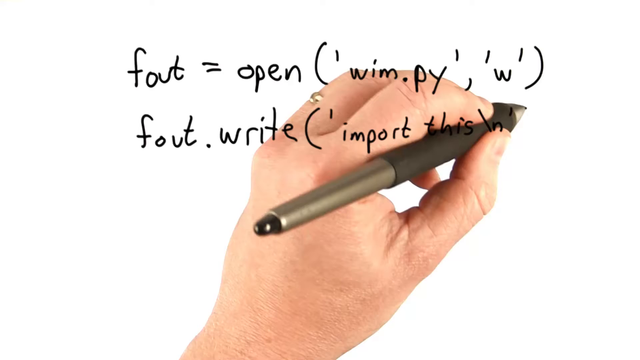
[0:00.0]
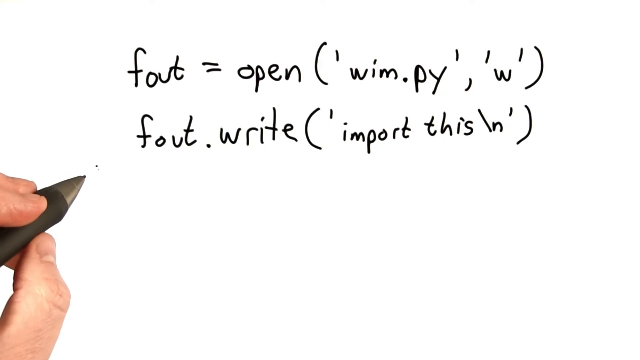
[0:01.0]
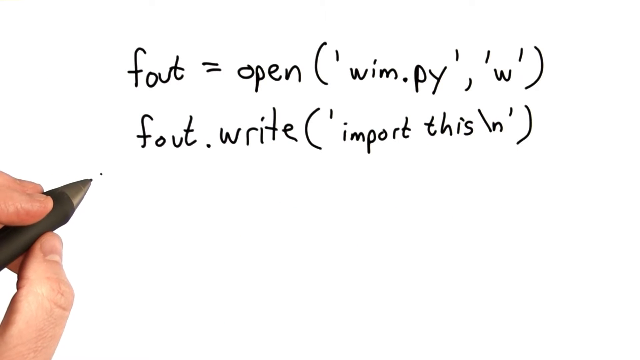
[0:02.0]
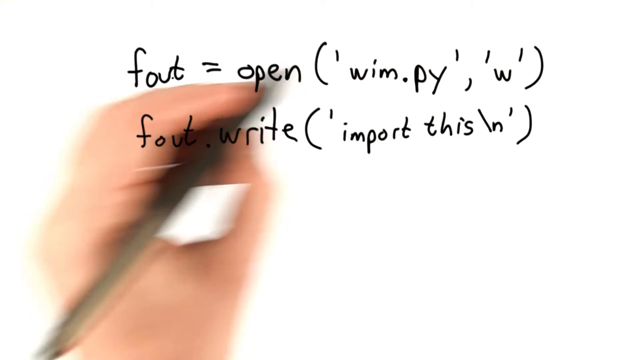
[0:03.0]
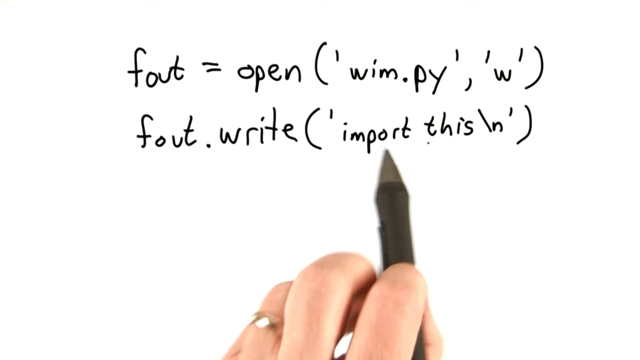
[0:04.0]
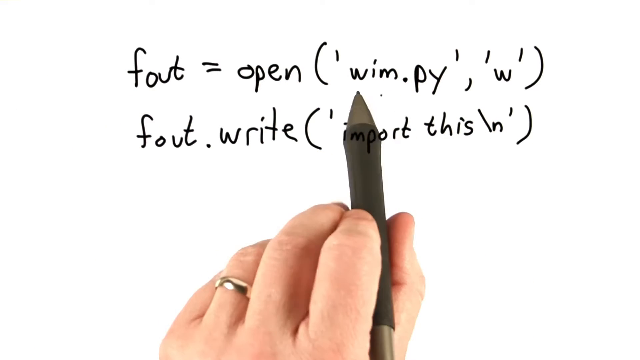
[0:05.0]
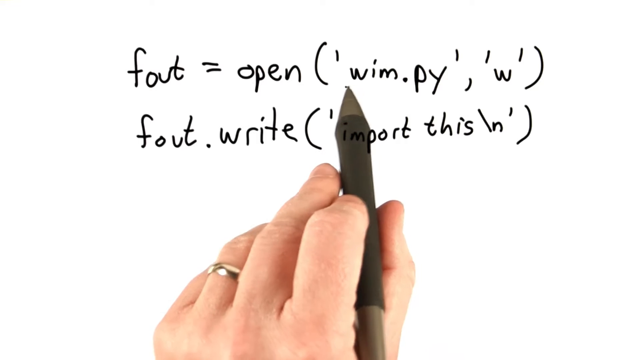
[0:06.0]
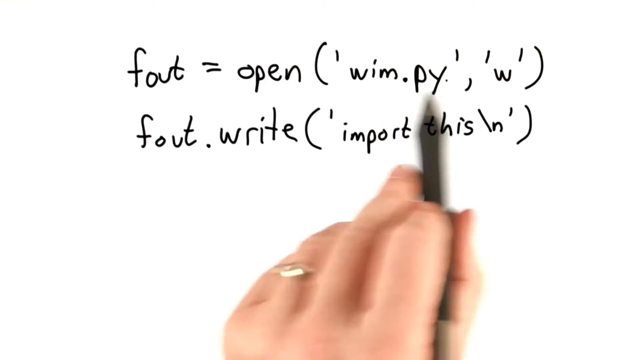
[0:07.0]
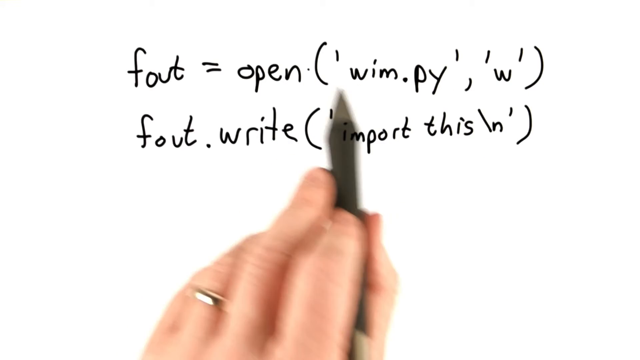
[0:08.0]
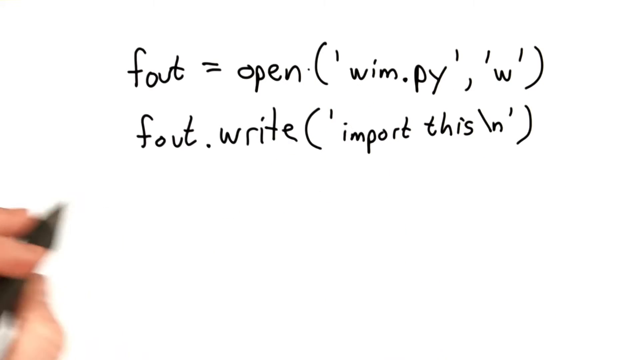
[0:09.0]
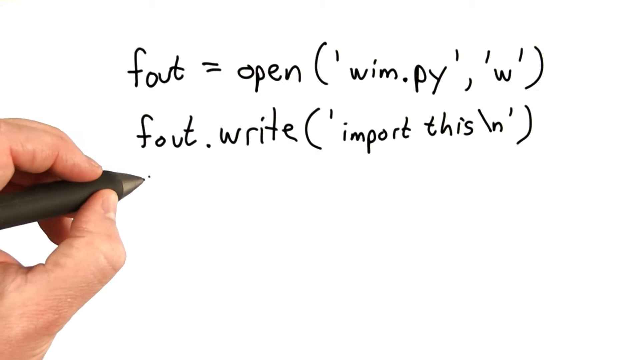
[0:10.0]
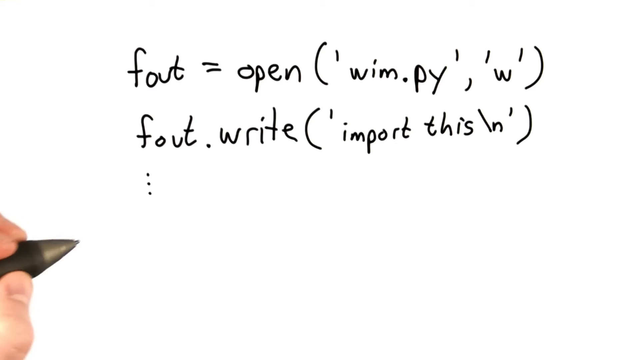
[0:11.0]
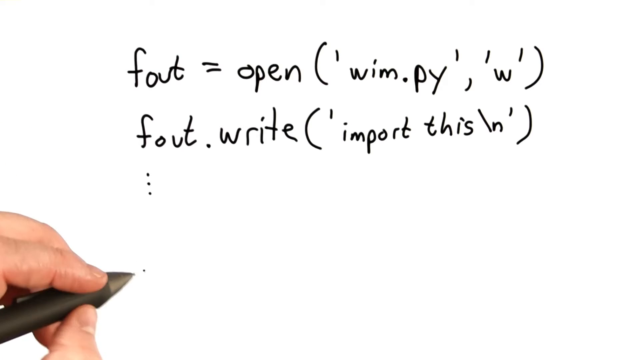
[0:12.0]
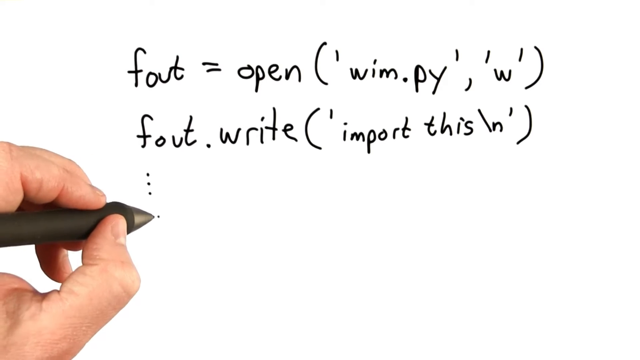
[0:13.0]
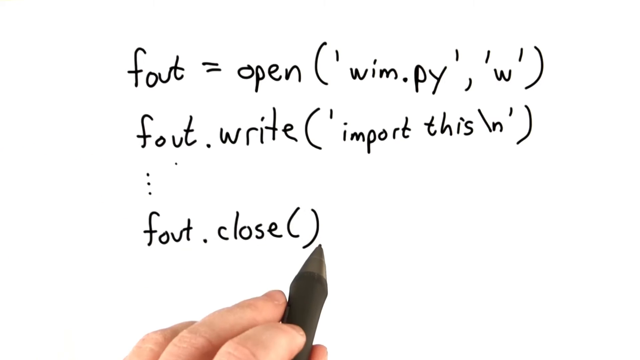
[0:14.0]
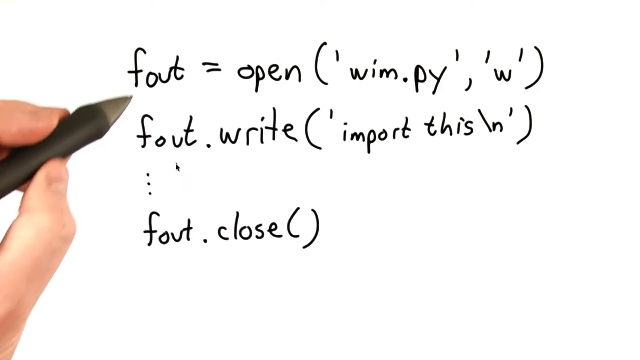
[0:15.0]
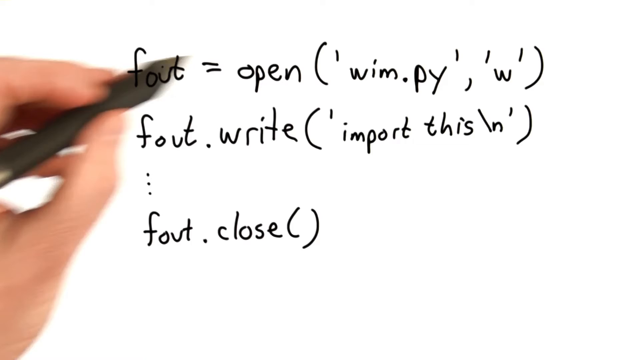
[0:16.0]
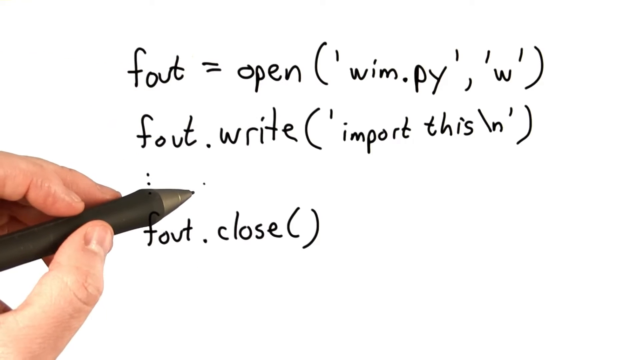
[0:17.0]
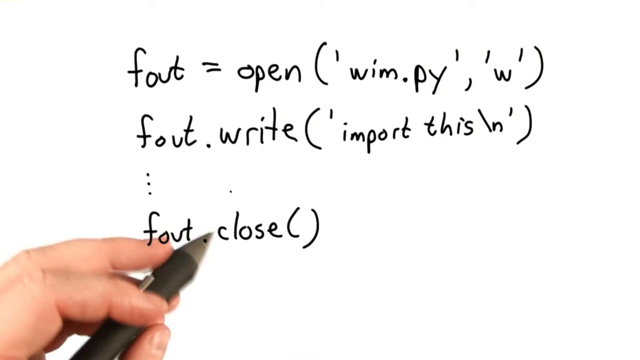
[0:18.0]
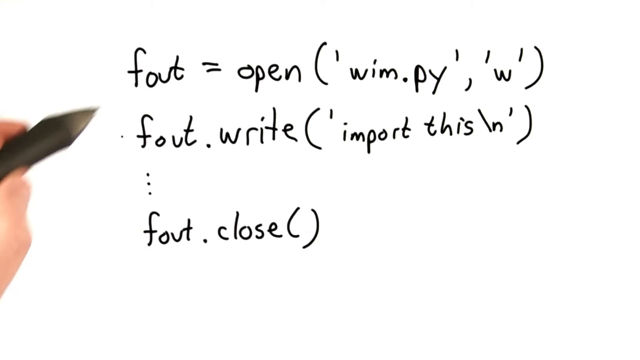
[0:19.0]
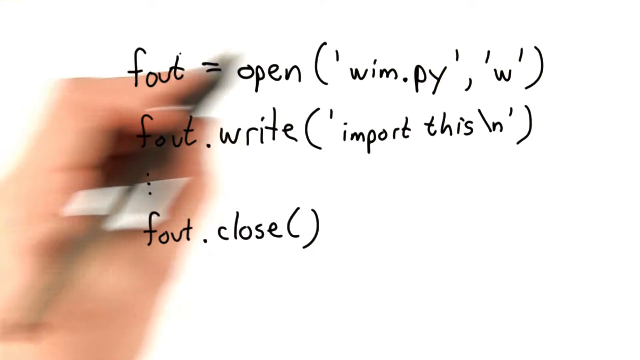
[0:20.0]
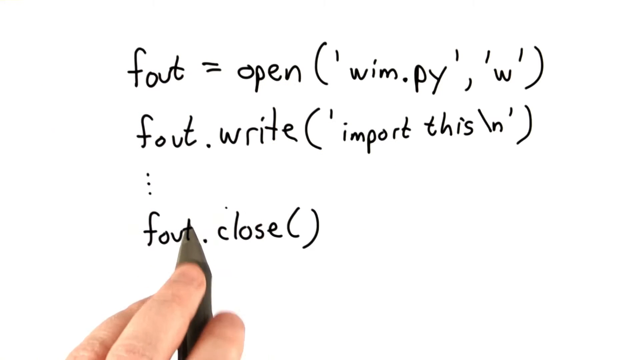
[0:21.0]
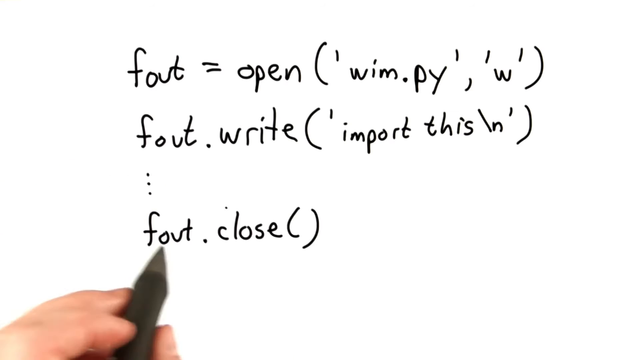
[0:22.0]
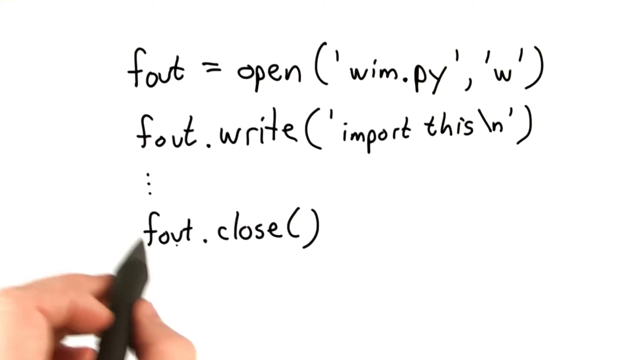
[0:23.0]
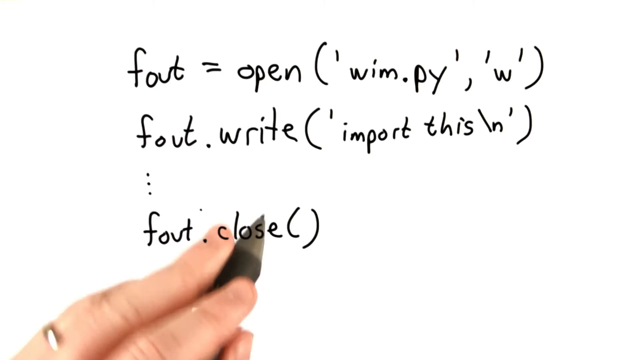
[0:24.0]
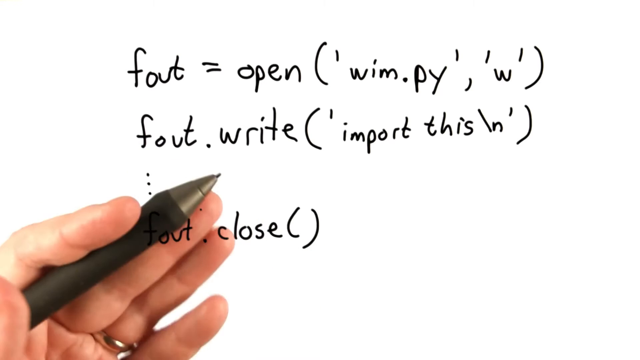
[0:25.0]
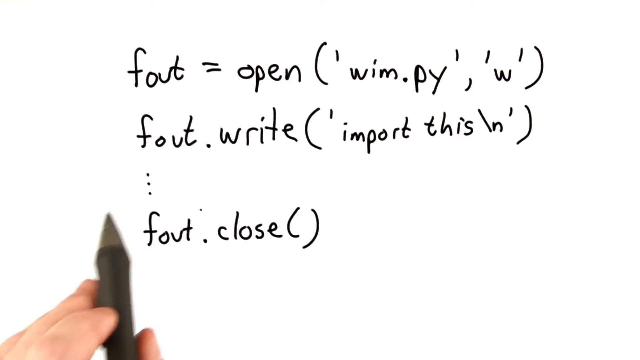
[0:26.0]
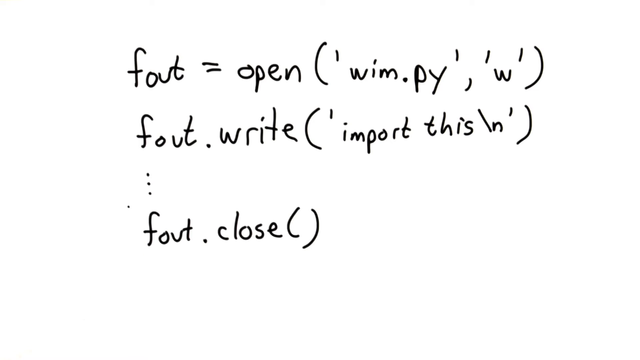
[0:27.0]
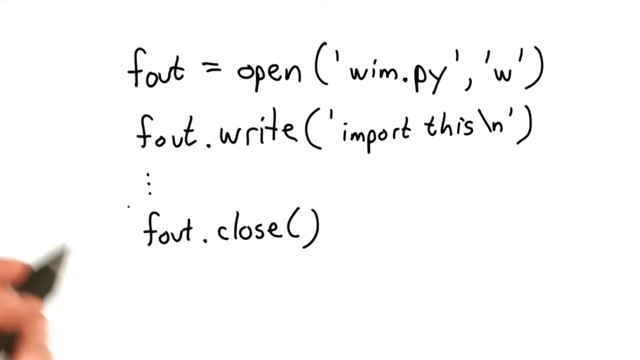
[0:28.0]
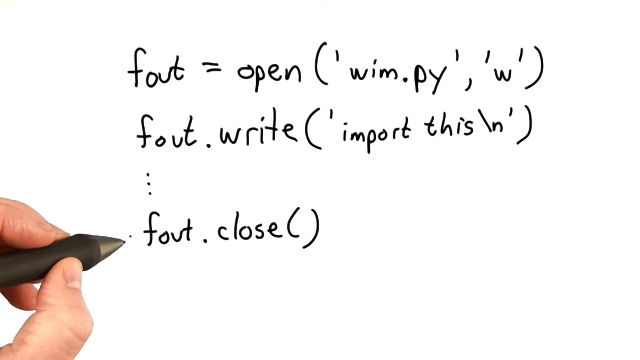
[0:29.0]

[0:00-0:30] Someone writes on a white virtual canvas with a ballpoint-style virtual pen. The writing includes an "open" line with a W in small brackets, followed by a line with "import this" and a slash n, along with three dots; another line seems to end in "close". It possibly is computer code, and the writing is very neat and legible.